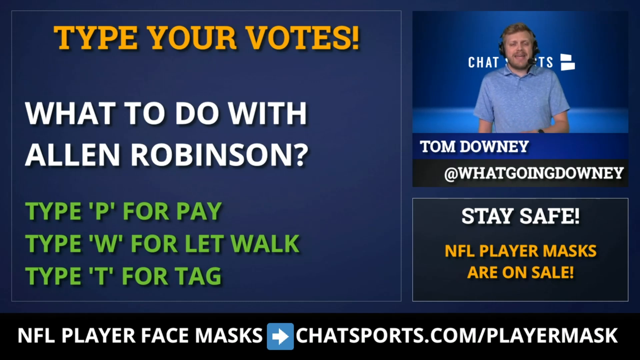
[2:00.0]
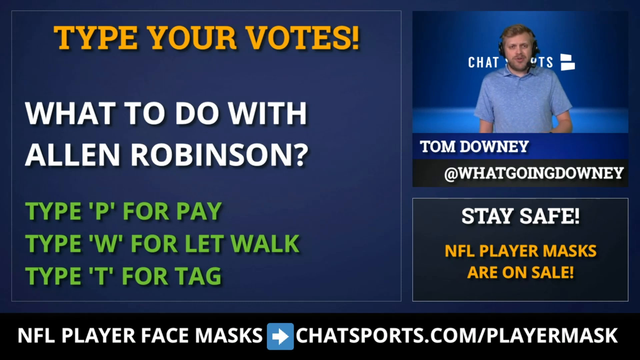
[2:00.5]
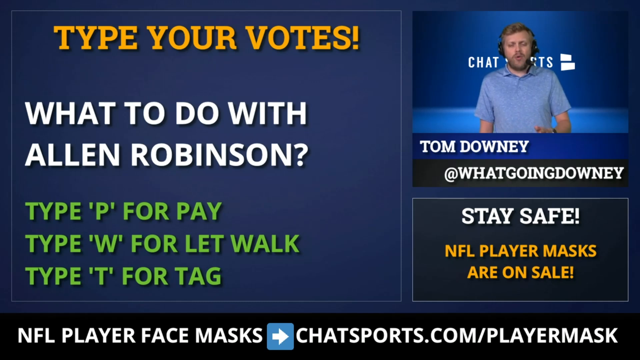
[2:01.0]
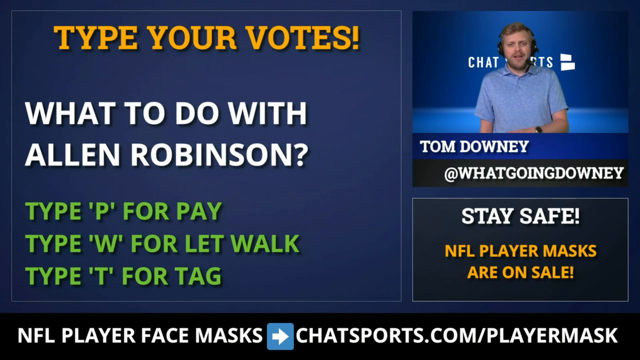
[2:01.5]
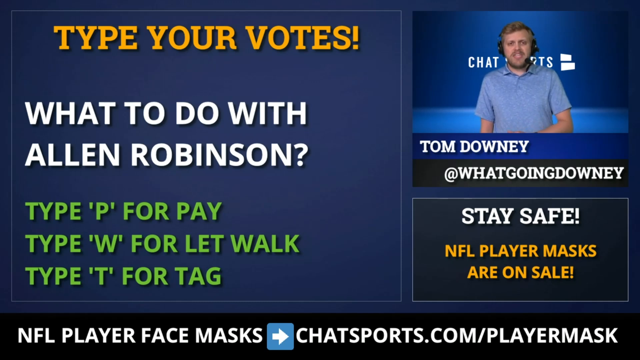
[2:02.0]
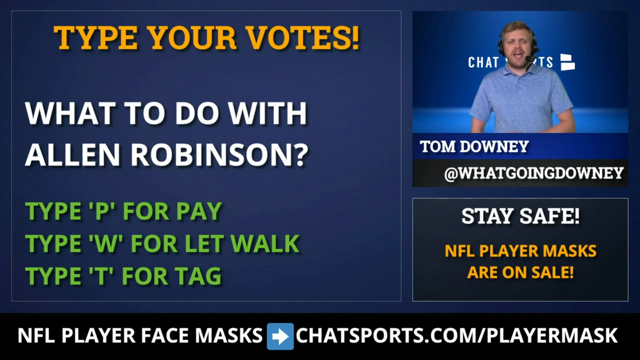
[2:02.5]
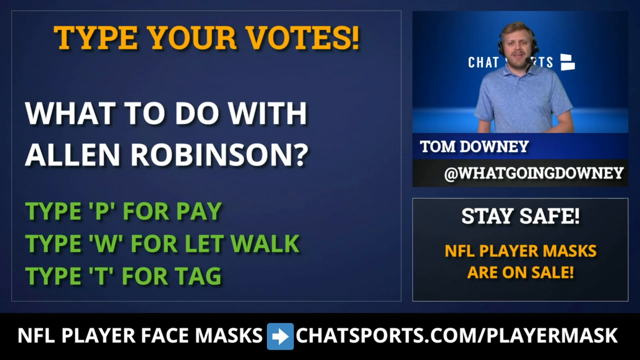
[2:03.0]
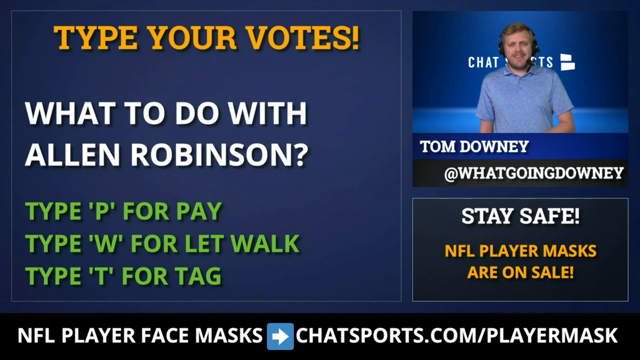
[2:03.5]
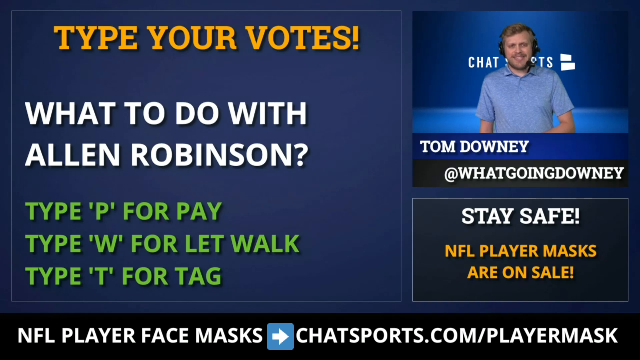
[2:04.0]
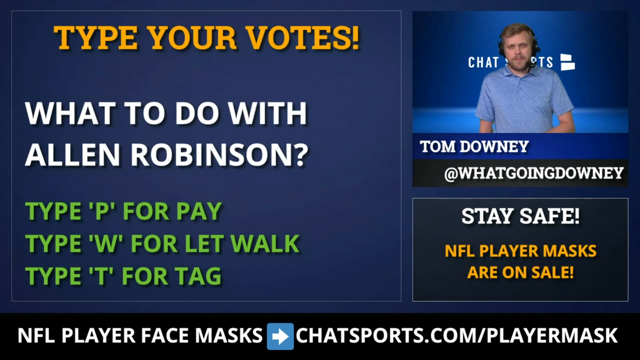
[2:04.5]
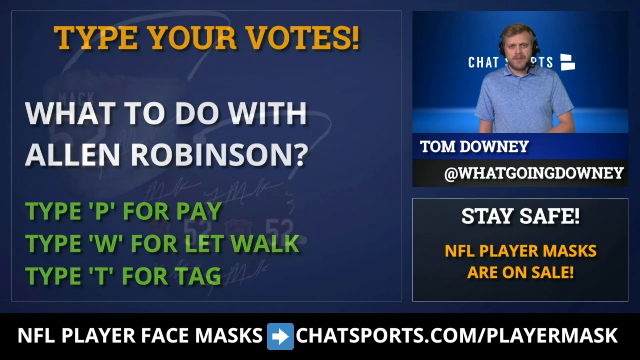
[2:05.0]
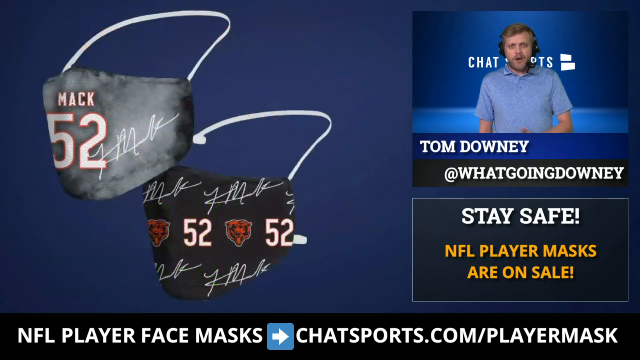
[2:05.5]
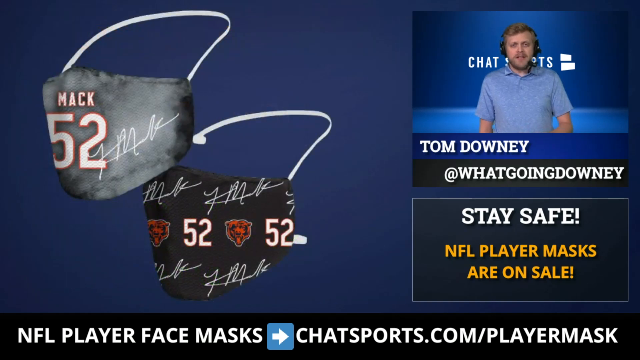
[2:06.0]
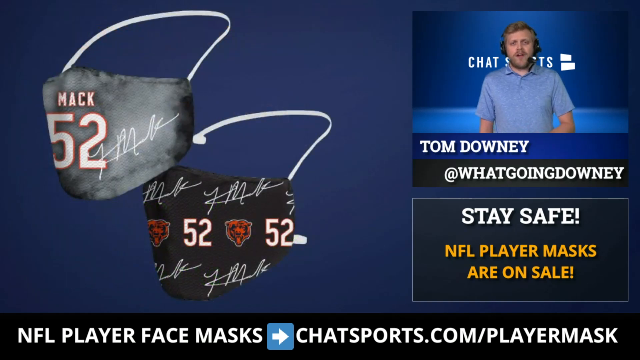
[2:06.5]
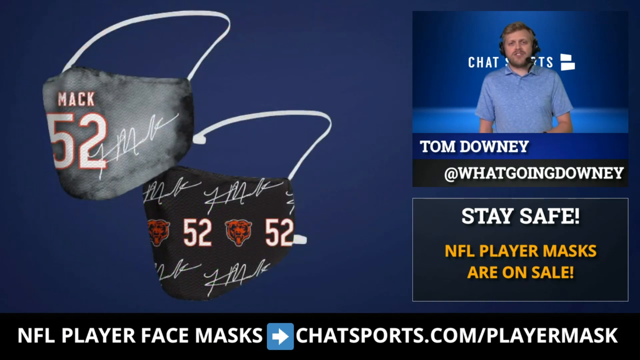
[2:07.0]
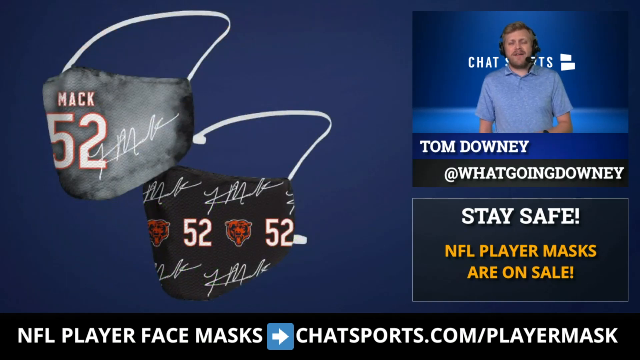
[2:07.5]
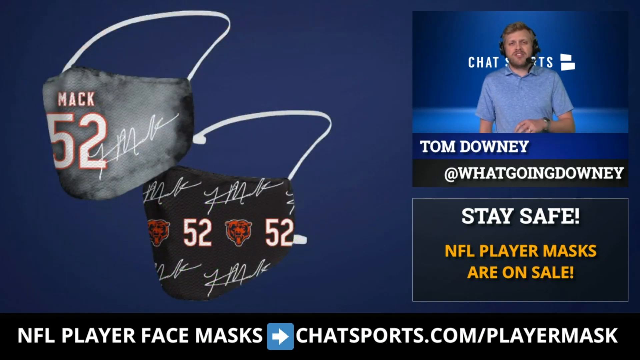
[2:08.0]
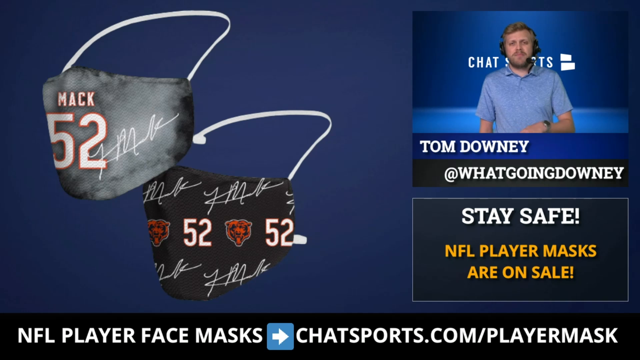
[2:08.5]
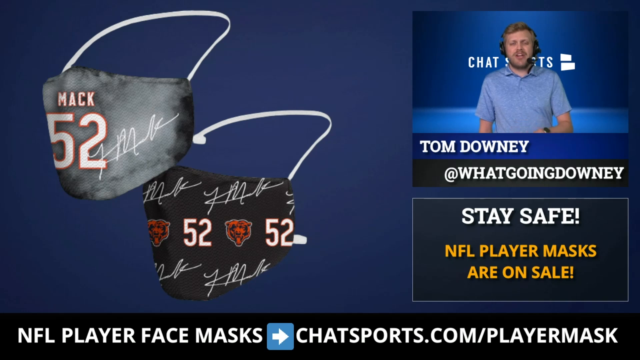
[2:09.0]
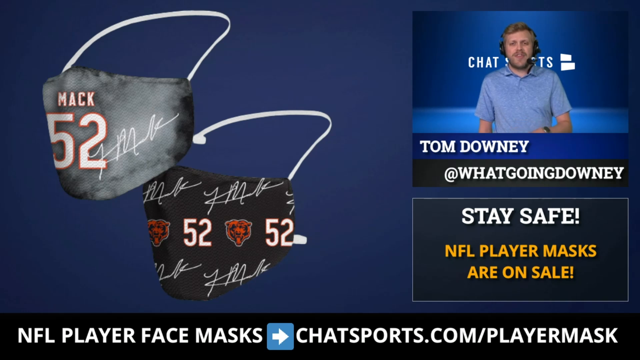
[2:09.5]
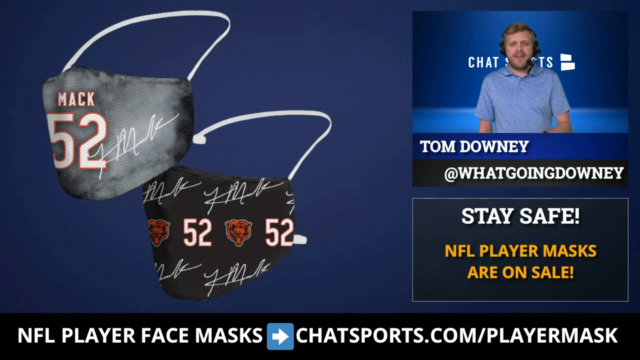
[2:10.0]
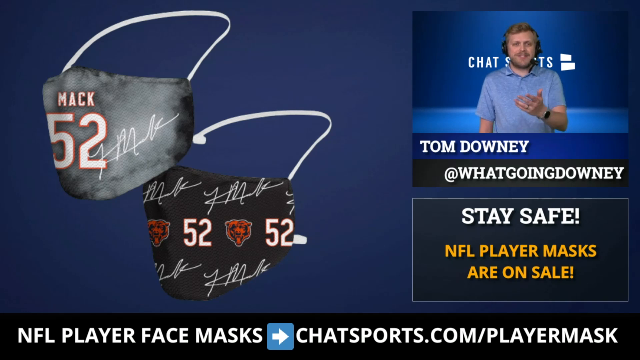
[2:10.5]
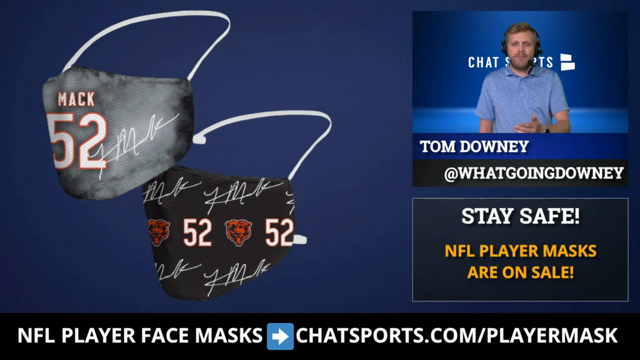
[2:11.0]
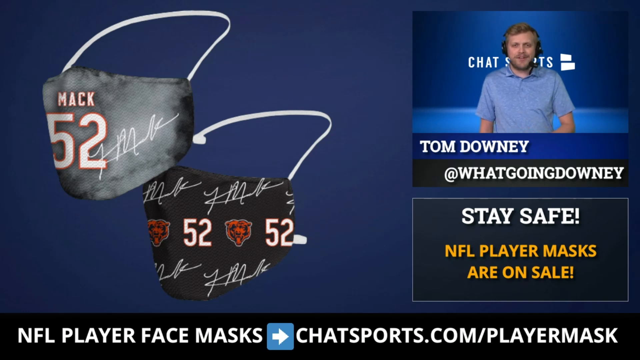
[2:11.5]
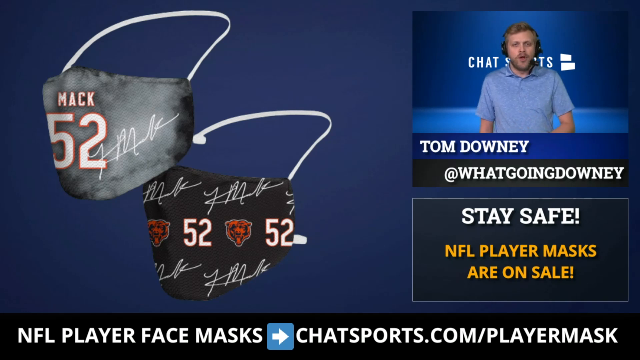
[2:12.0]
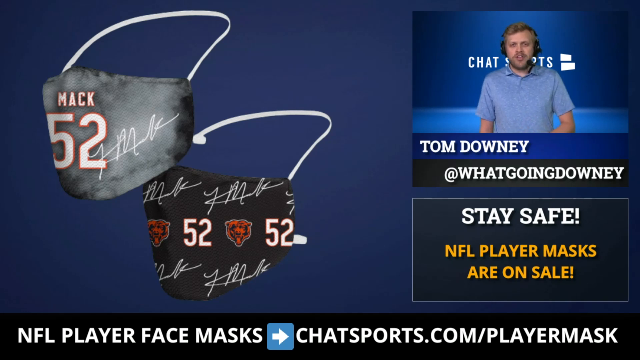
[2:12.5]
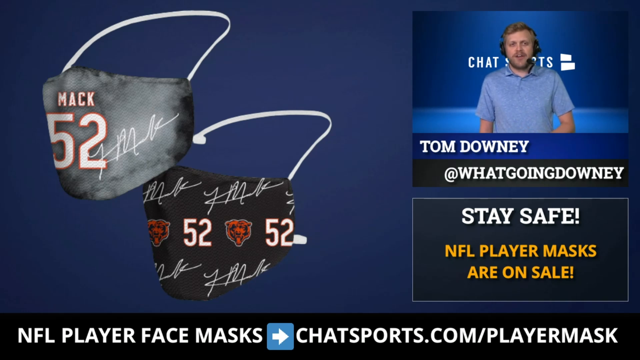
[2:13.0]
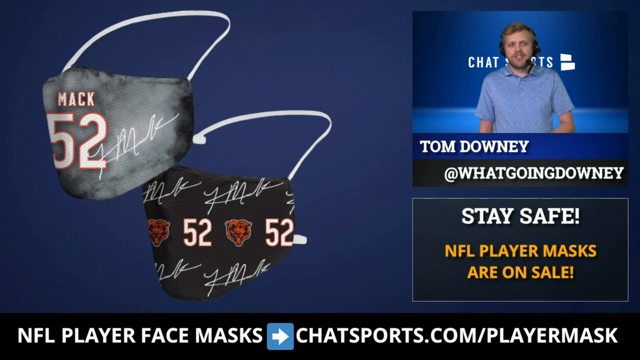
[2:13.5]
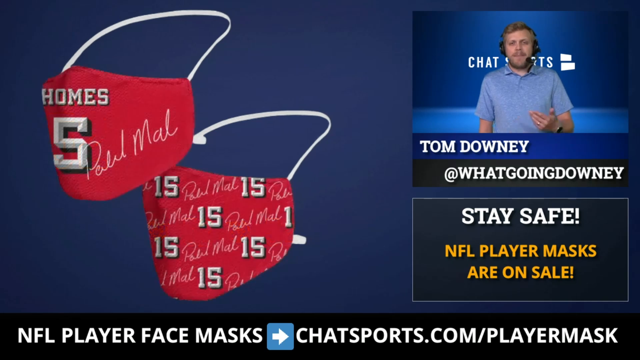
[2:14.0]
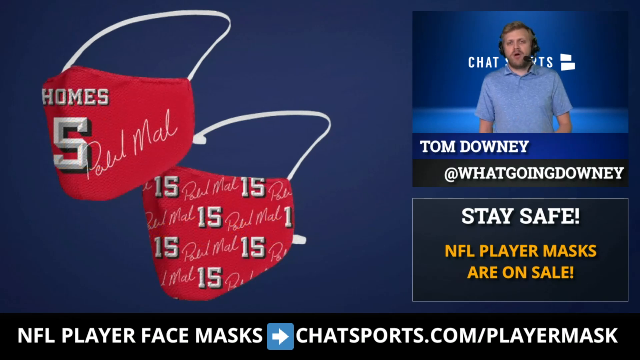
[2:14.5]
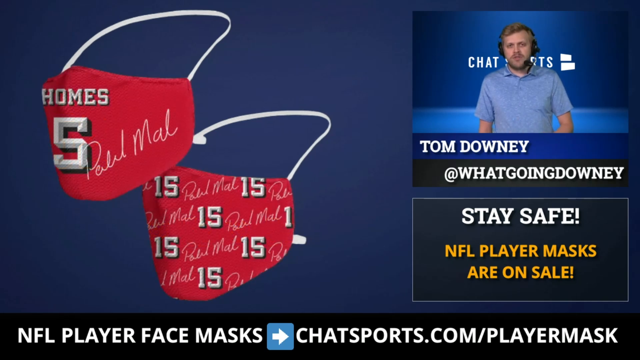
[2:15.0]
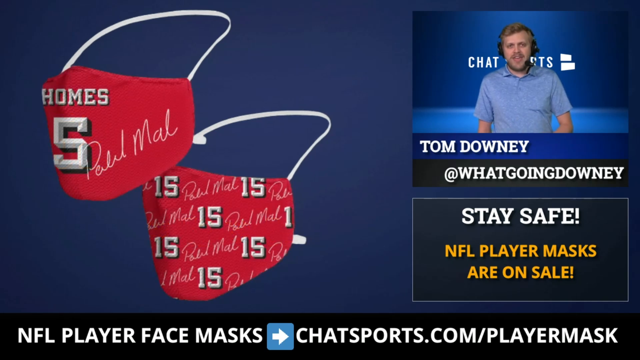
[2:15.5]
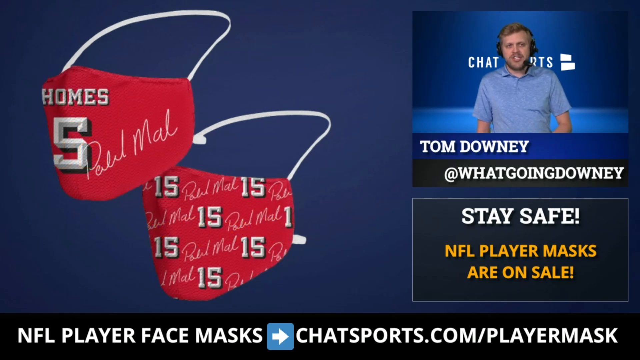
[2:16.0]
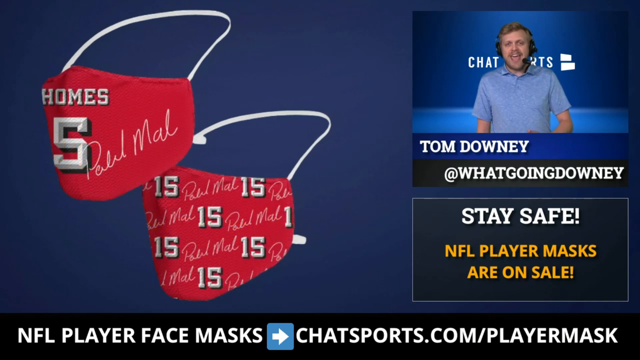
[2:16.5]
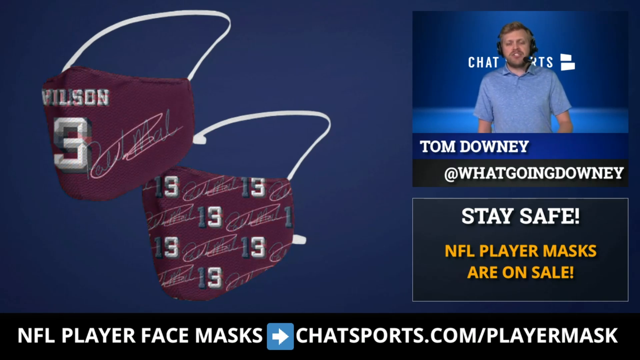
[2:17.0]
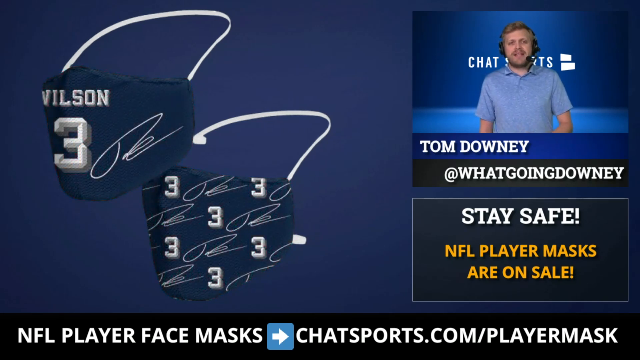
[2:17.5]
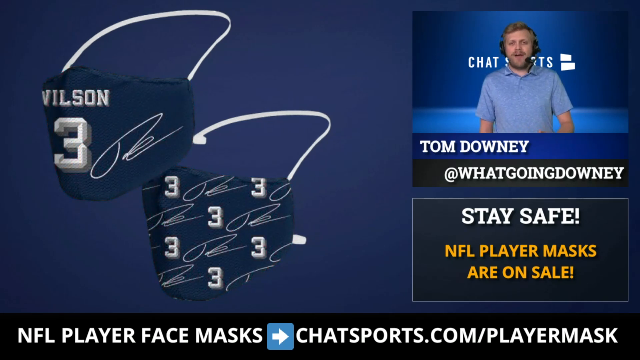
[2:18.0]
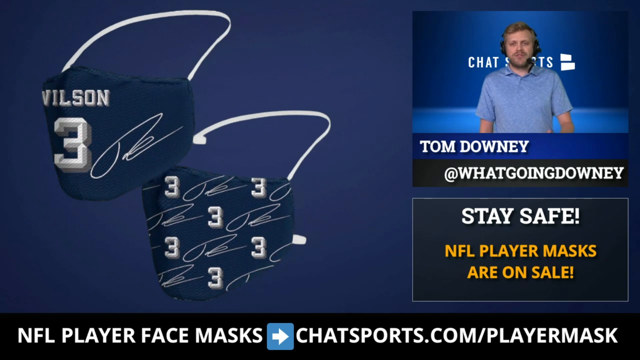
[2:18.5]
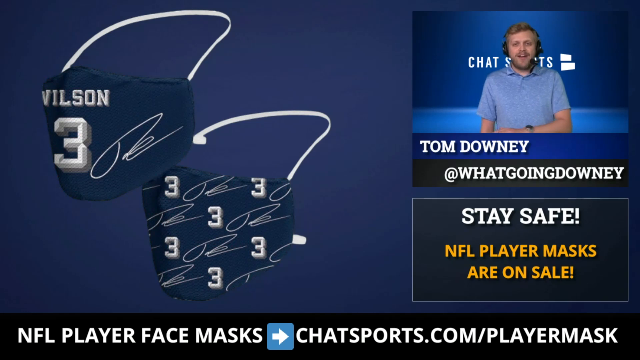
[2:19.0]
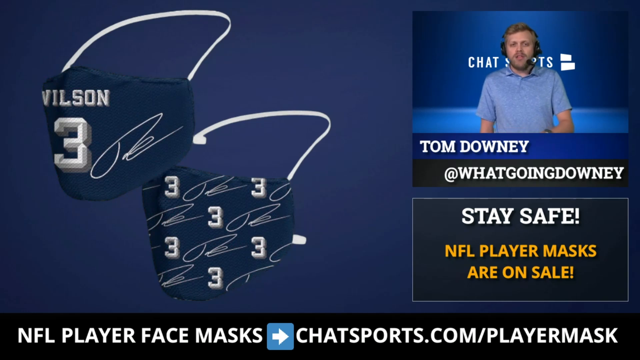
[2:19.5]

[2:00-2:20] A page reads "type your votes" and "what to do with Alan Robinson", with three selections shown in green. Tom Downey appears live in a video, conducting a sports chat with a headset and microphone; his tag reads "at what going Downey", and underneath it reads "stay safe" and "NFL player masks are on sale". Two example NFL player masks are then shown, both number 52 with the player's name on them, one gray and one black, while Tom Downey continues to speak. Red and blue masks are also shown, each with a player's name and number.